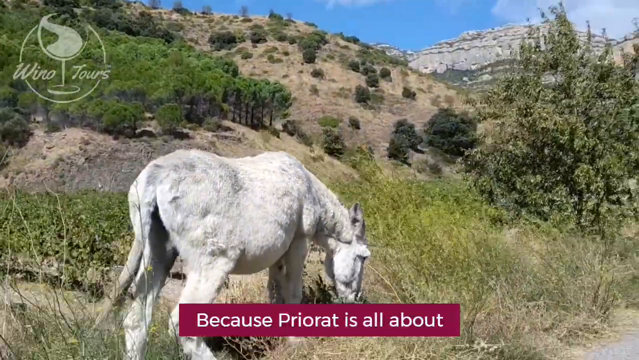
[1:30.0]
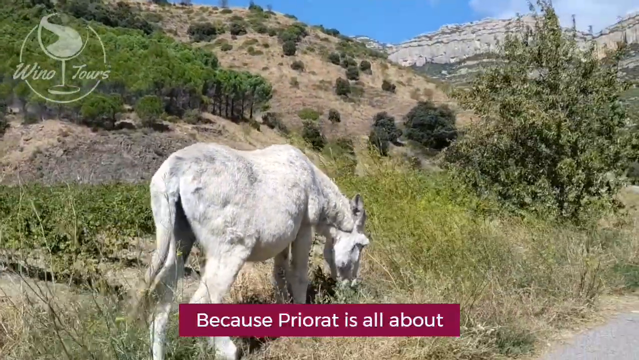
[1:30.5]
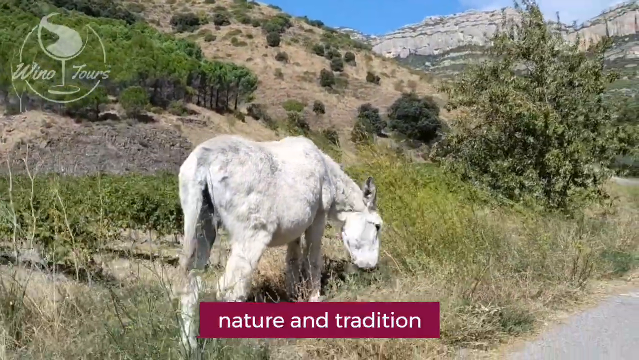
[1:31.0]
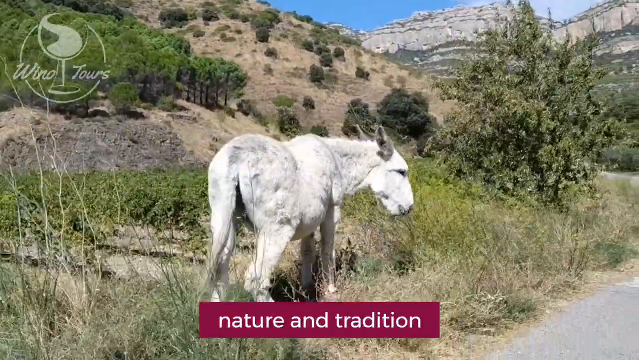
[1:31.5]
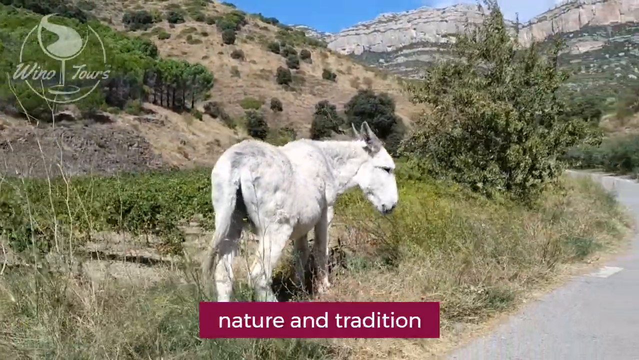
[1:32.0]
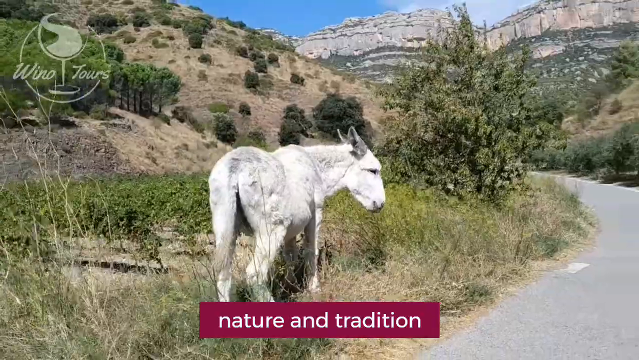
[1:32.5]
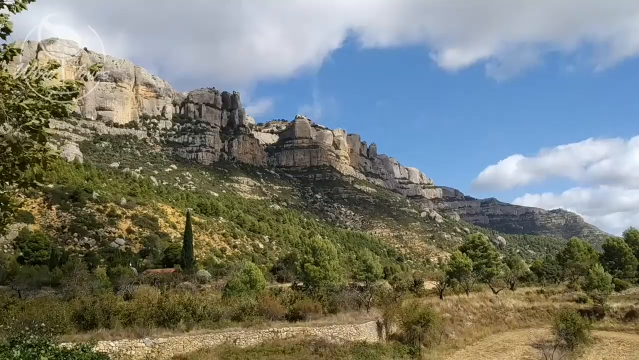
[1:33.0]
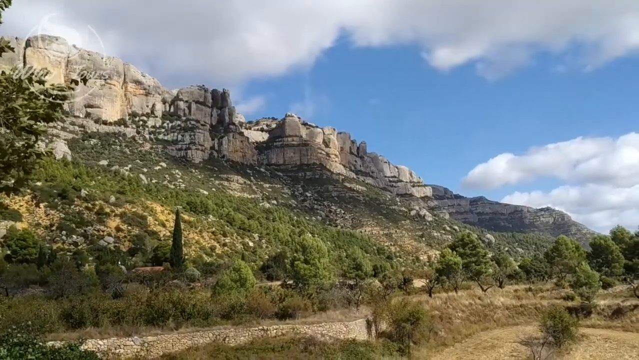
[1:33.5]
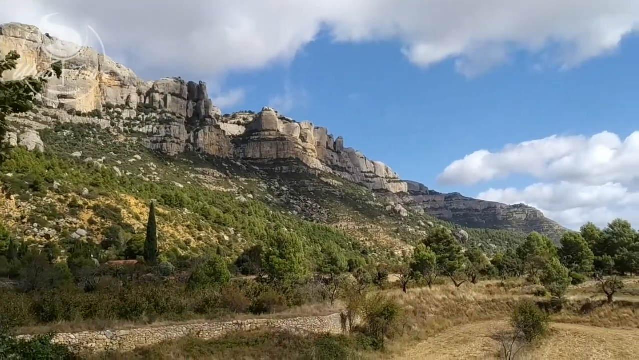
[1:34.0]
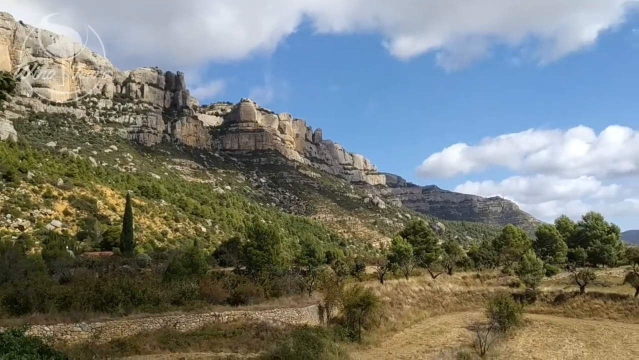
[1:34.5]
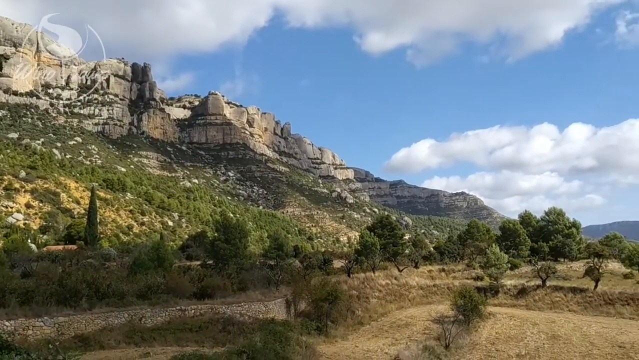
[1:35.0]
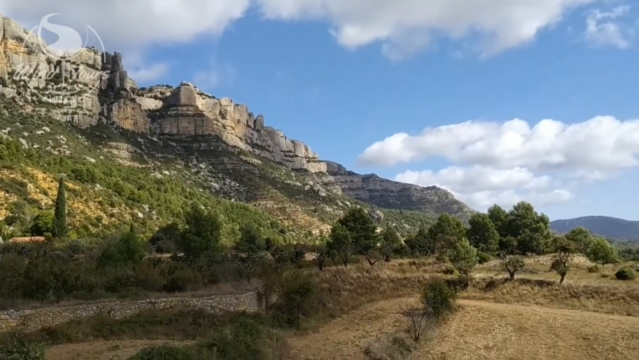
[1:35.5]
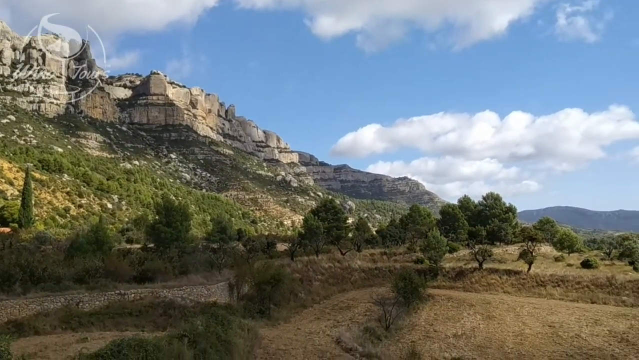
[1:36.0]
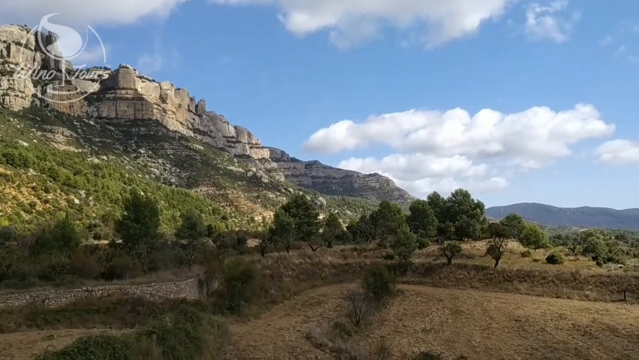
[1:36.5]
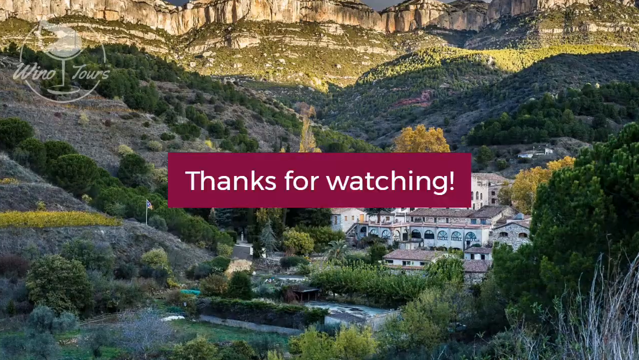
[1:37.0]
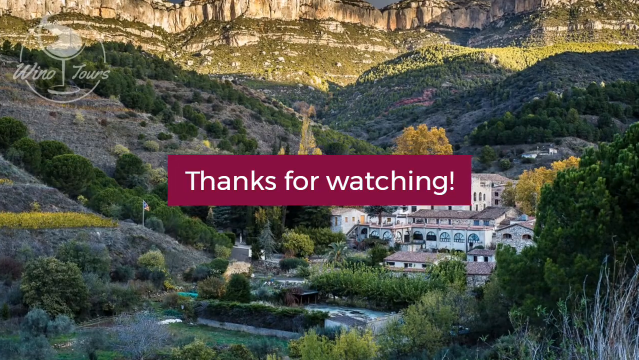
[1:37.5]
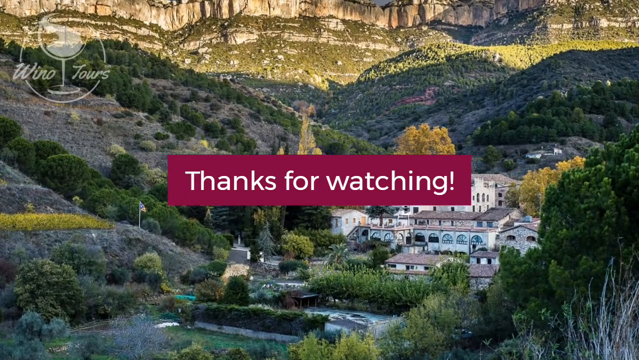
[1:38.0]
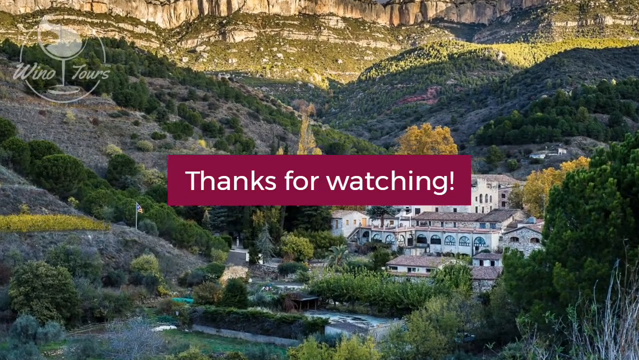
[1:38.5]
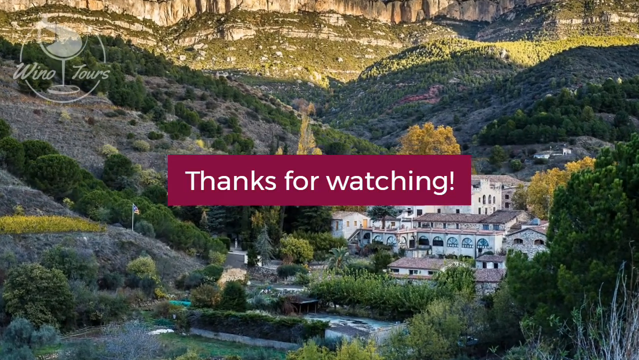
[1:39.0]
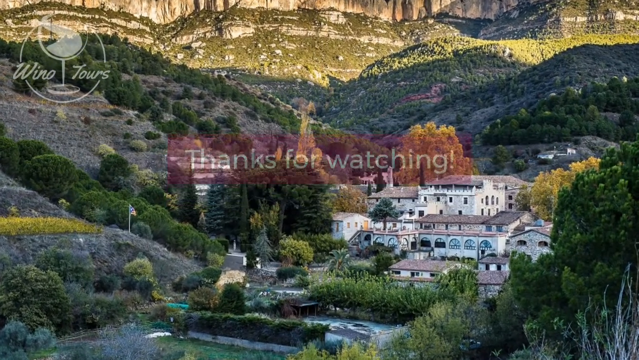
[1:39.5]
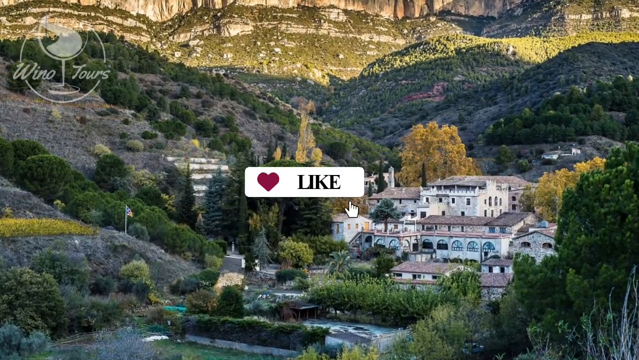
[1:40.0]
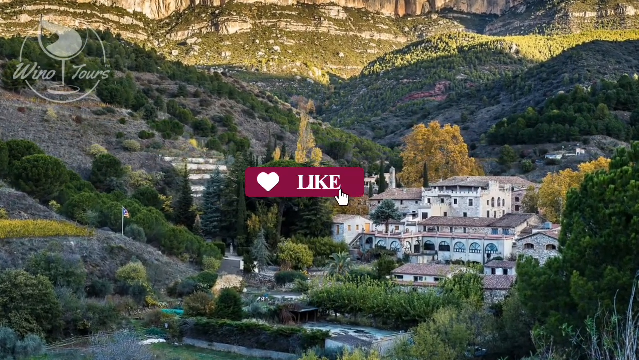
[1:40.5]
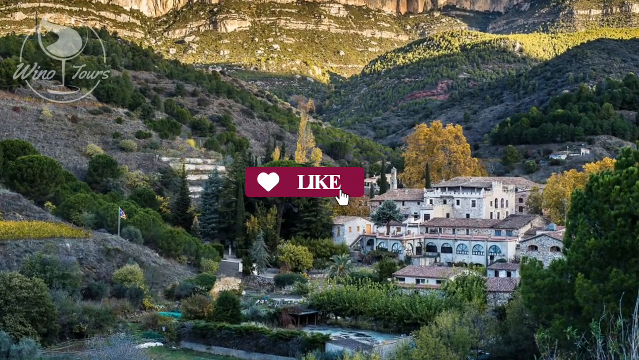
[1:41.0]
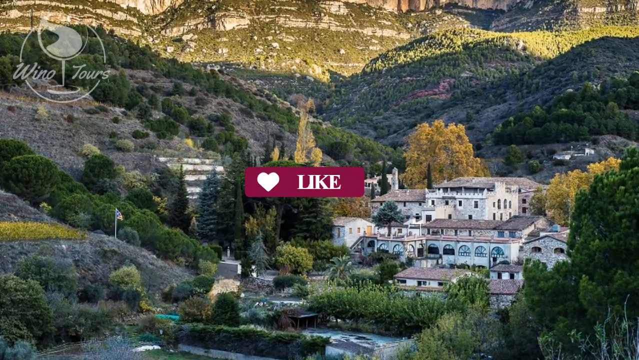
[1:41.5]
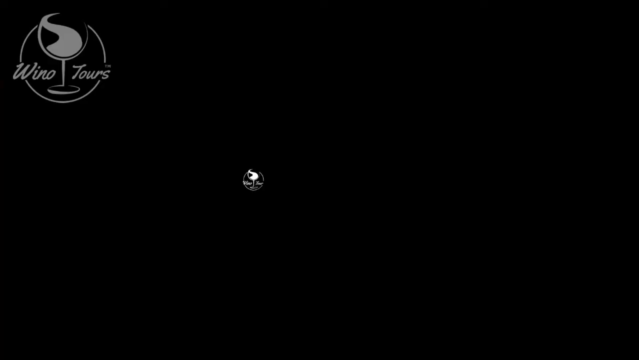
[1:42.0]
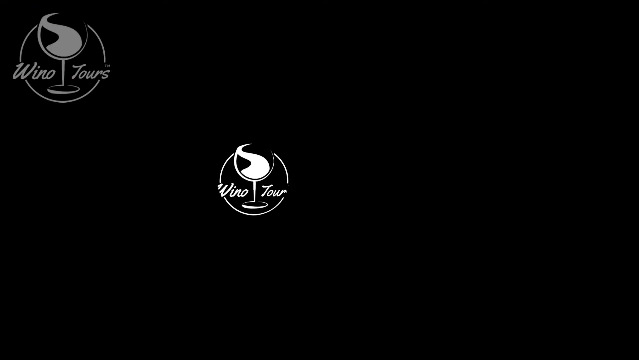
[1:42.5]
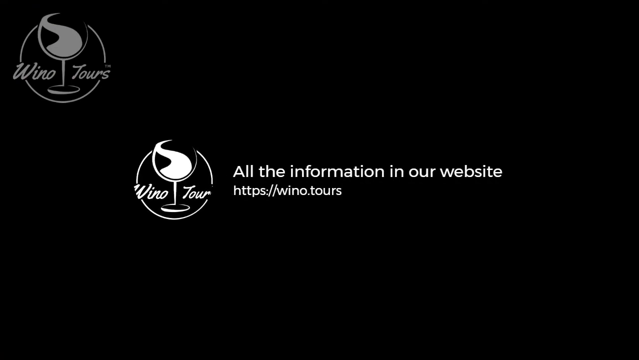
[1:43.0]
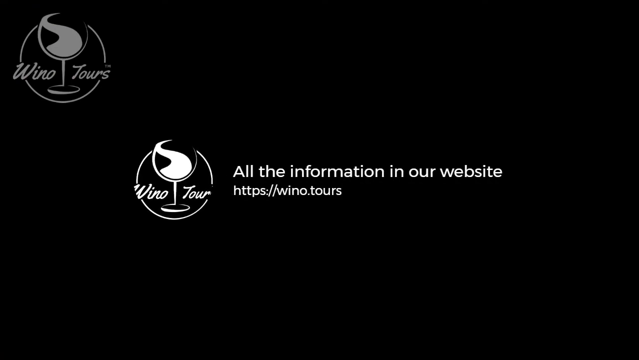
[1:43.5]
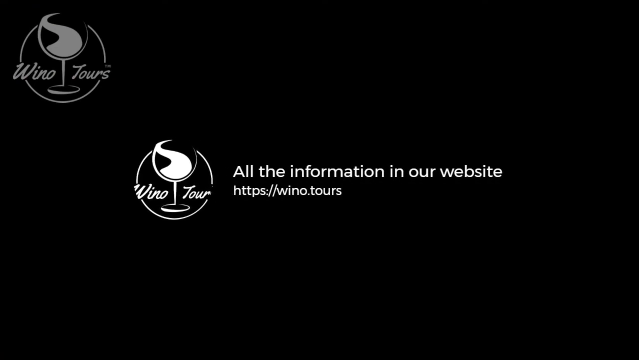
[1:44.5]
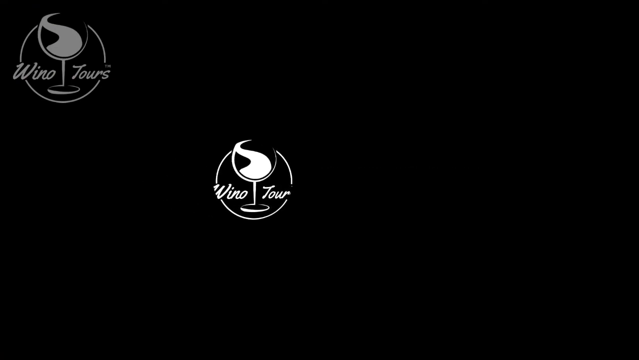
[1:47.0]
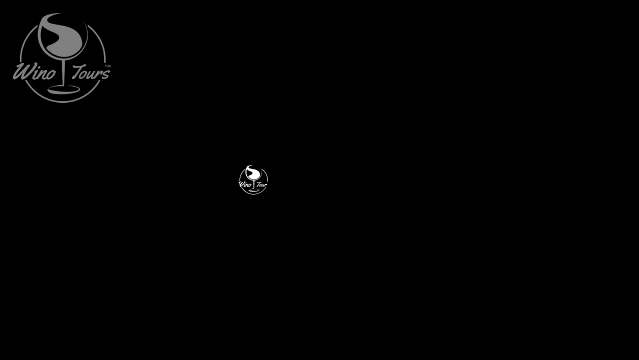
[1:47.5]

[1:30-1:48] The camera moves backwards down the road, leaving the donkey behind and moving away from the place, with mountains in the distance. The donkey turns its head to look at the camera, and the view abruptly switches to a different outdoor scene: blue sky with many white fluffy clouds, and a rocky hillside with green plants and maybe some brownish grass. It switches once more back to the original view from the beginning of the video, showing the winery in the distance, and white text in a maroon box says "Thanks for watching!" The view zooms in a little more toward the winery, and another maroon text box pops up with the word "LIKE" in all capitals and a white heart graphic, with a clicking animation encouraging the viewer to like the video. The video goes to black, showing the white wine-glass logo surrounded by the word "winotour", without an S, and the text "All the information in our website https://wino.tours".